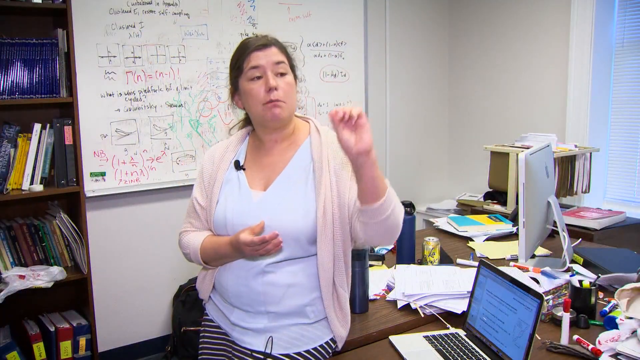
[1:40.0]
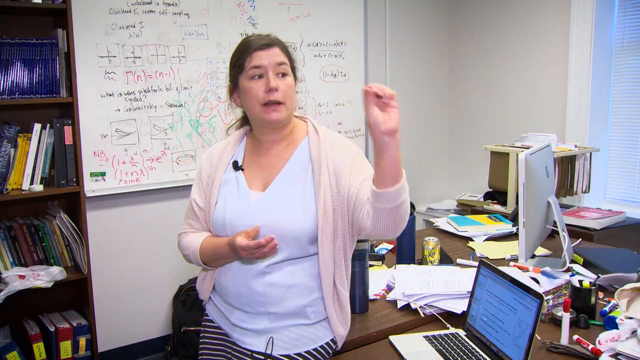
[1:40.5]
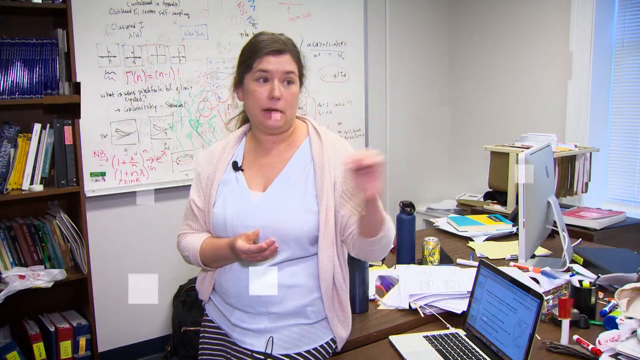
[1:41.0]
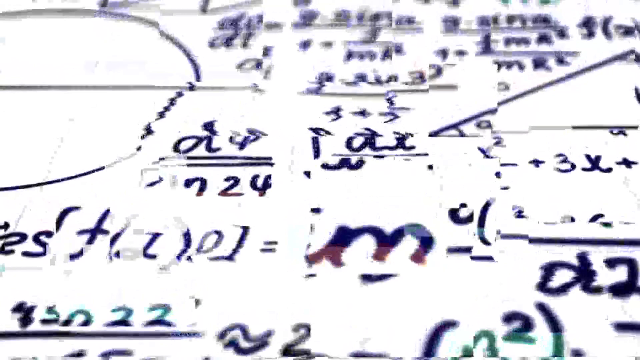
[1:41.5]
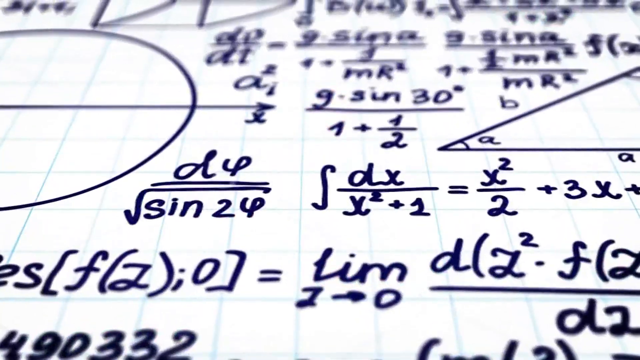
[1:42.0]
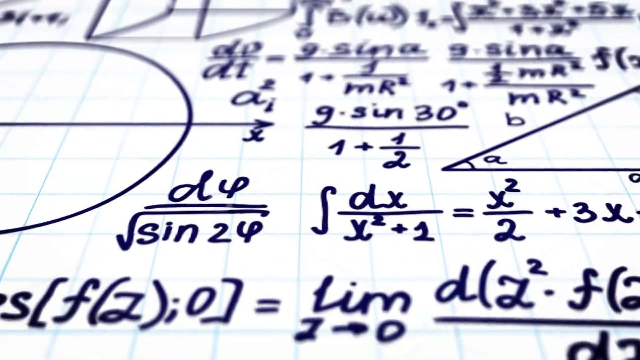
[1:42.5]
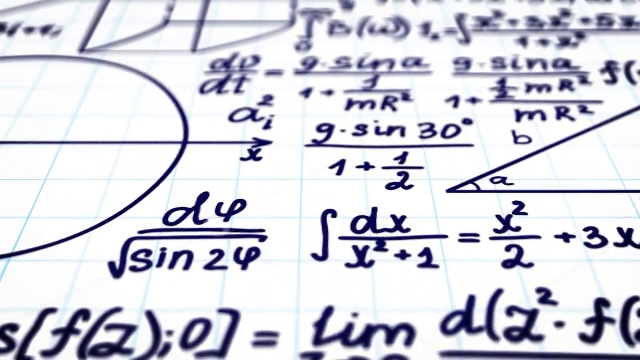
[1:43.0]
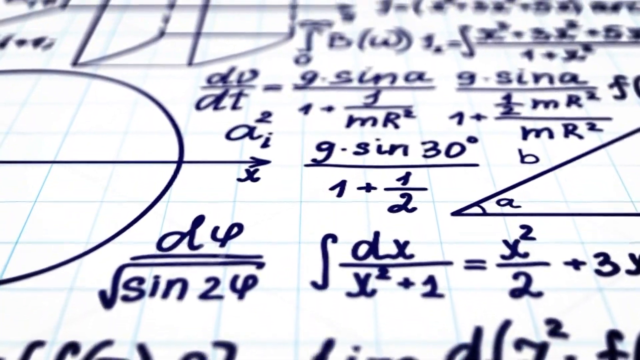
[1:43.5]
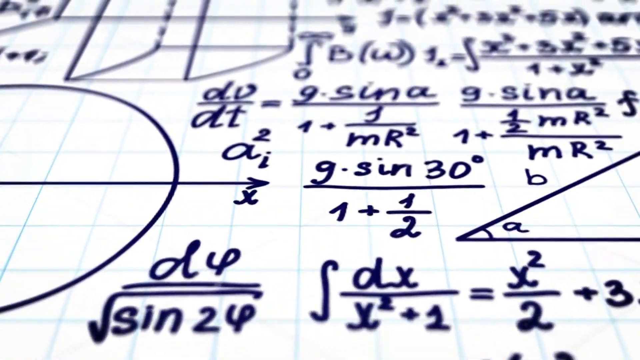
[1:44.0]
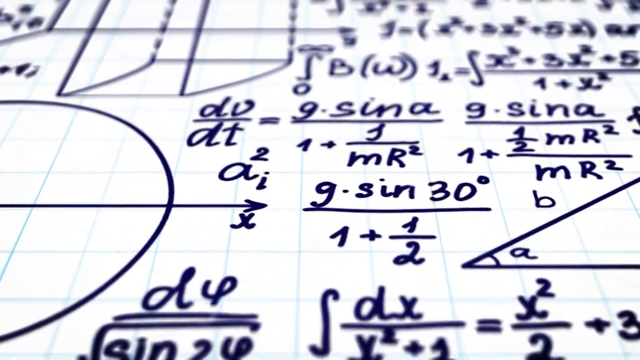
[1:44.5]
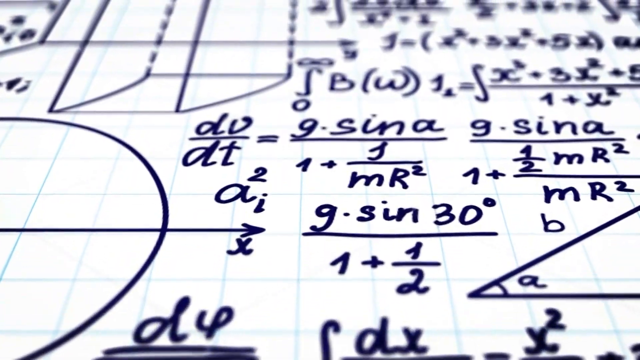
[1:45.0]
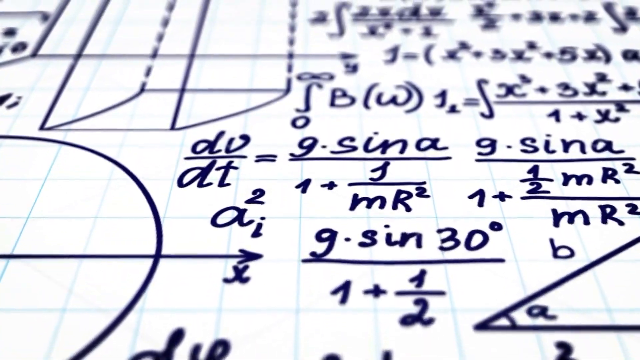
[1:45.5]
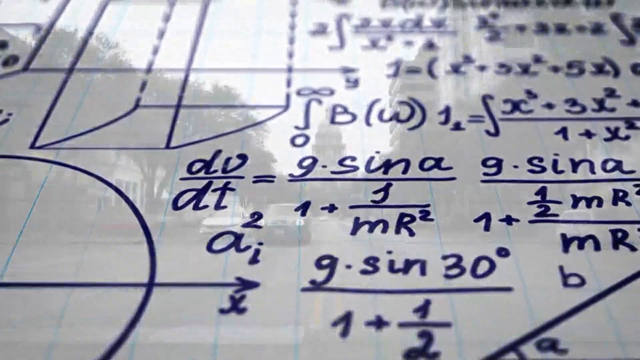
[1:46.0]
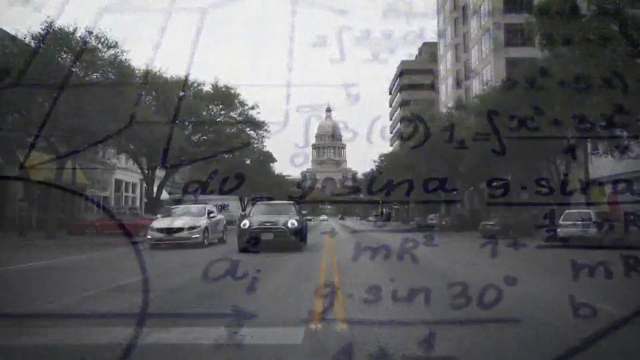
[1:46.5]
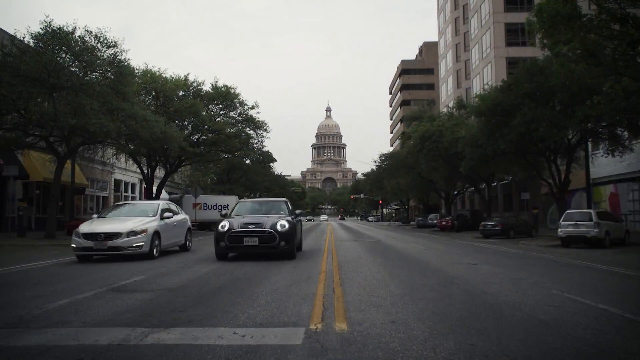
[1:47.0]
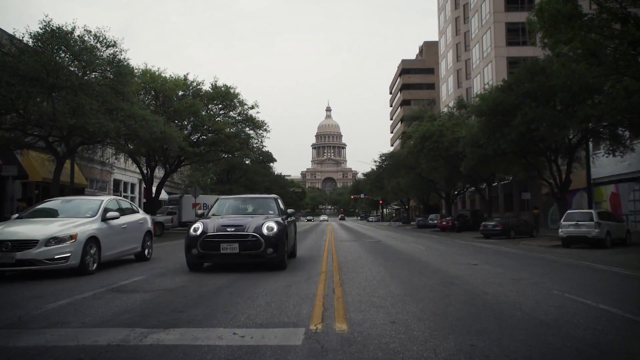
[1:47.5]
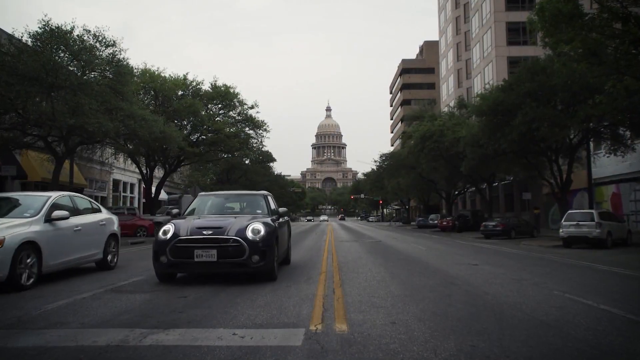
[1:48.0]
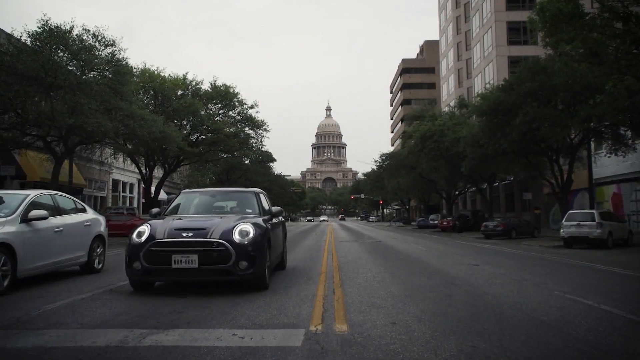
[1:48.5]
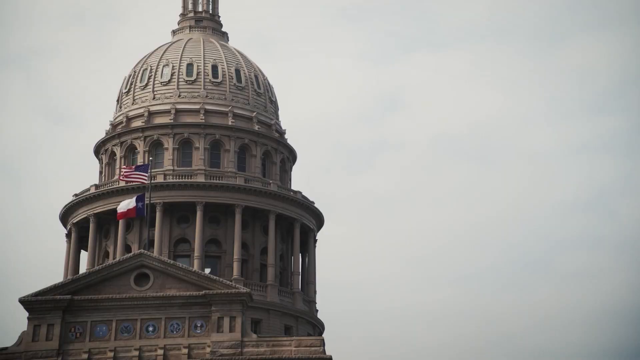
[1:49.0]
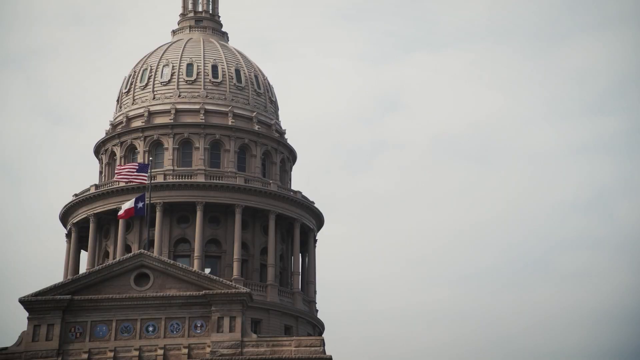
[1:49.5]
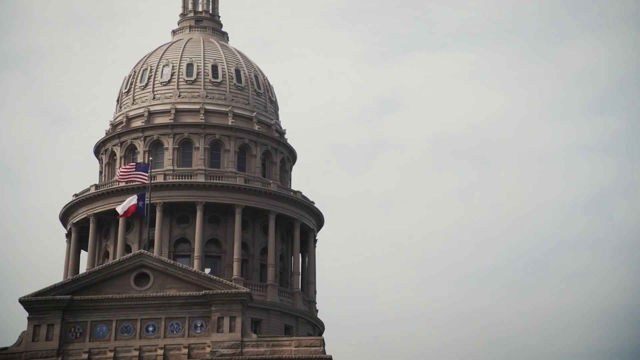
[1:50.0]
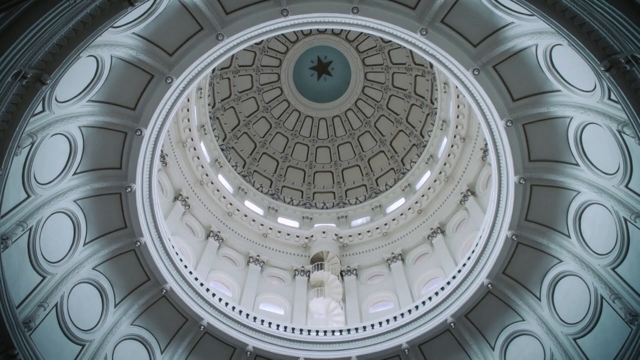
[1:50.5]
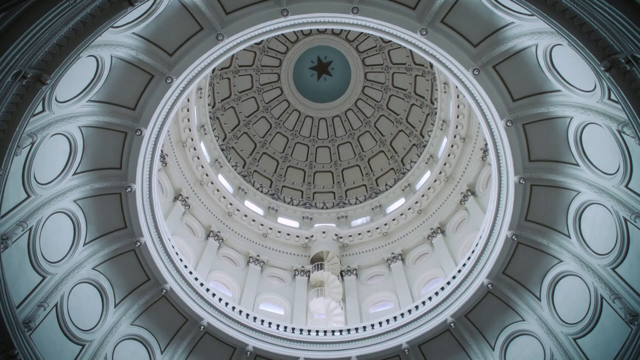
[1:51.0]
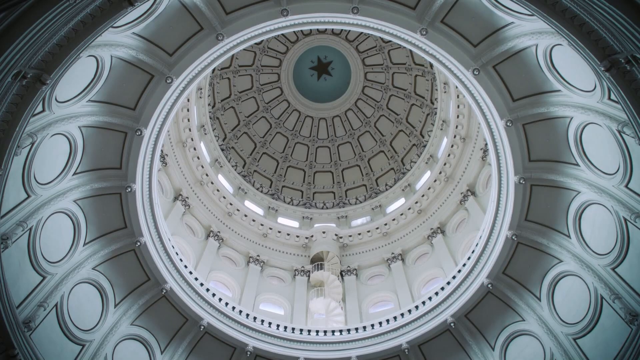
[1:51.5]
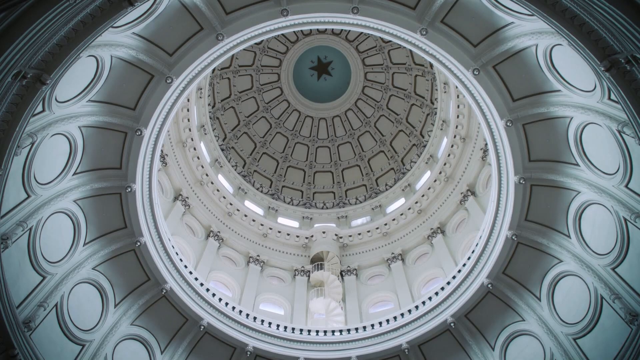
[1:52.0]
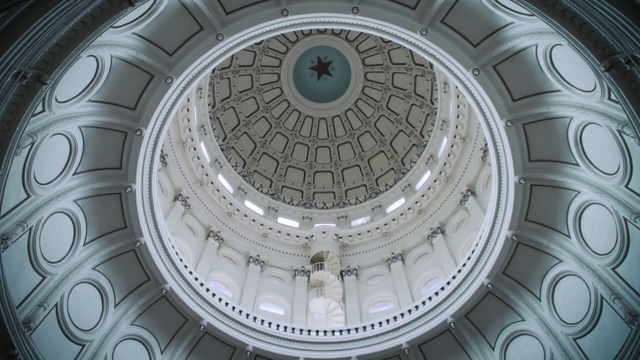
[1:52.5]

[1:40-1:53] An angled view shows a piece of graph paper that is completely filled in with math equations. The camera moves up, or scrolls up, the paper at a very close angle. The video then transitions to a street-level view of the street leading to the Capitol in Texas, looking straight down the street at the Capitol building.